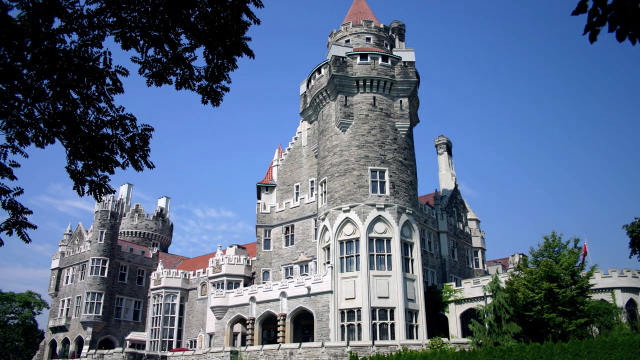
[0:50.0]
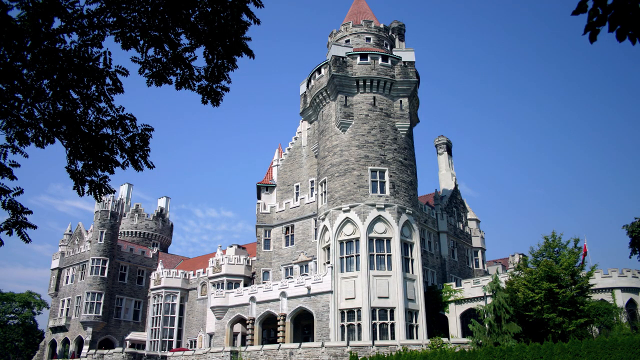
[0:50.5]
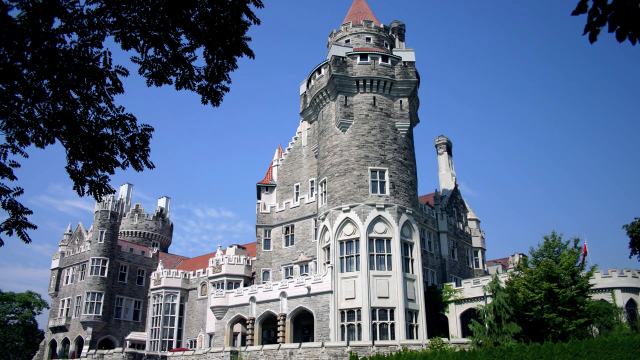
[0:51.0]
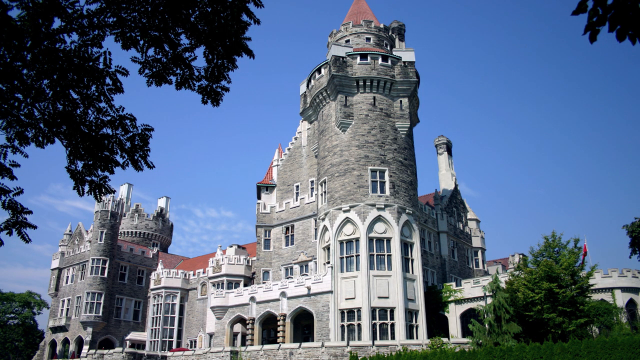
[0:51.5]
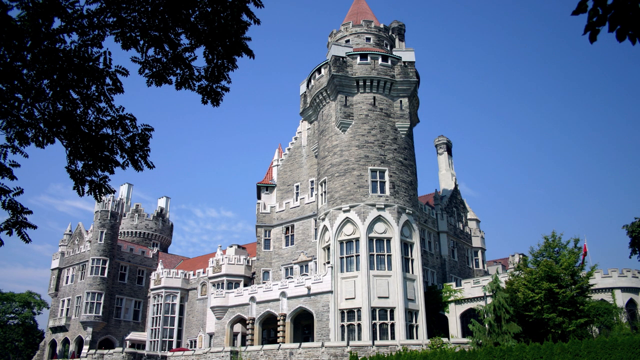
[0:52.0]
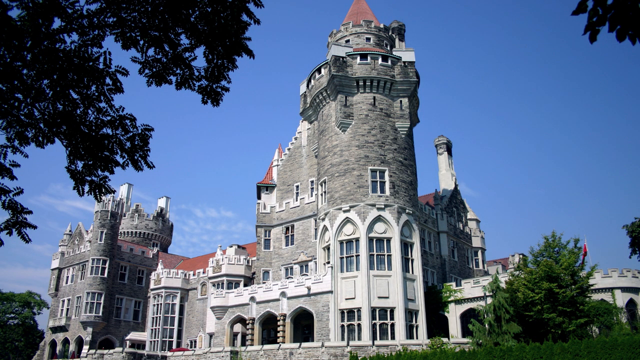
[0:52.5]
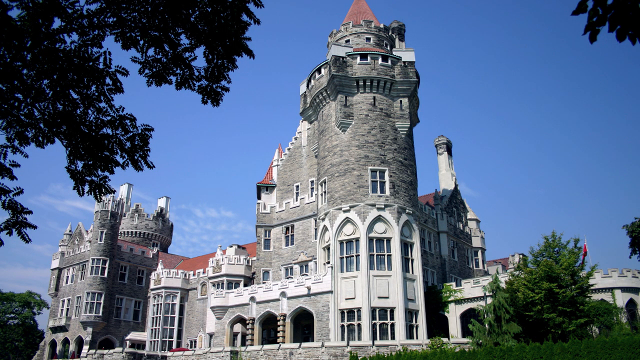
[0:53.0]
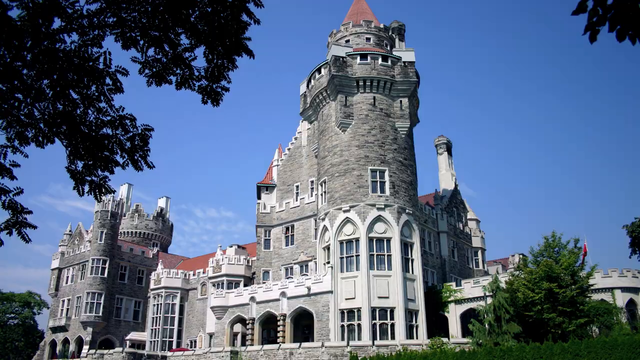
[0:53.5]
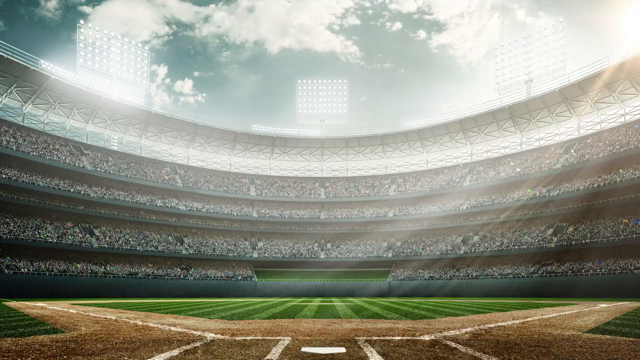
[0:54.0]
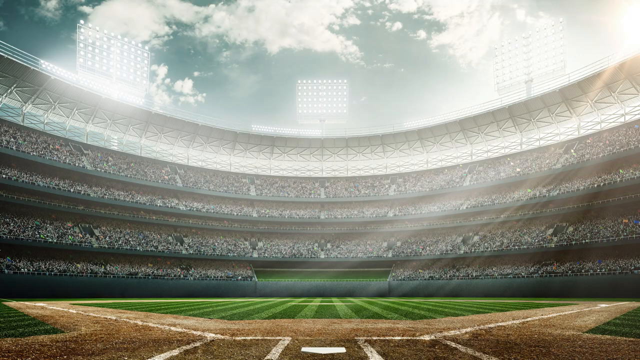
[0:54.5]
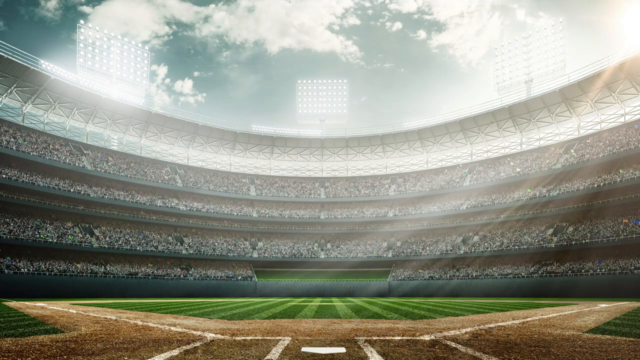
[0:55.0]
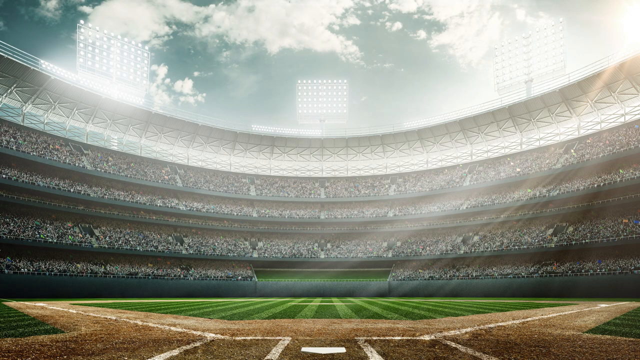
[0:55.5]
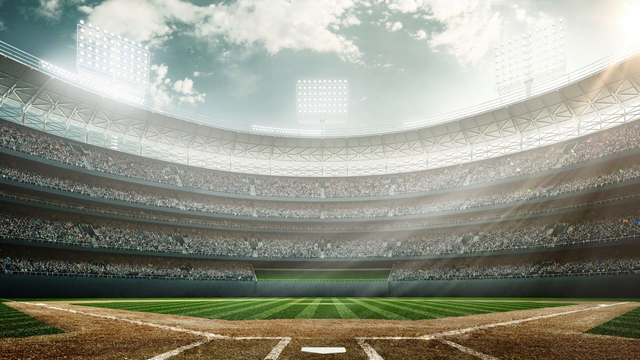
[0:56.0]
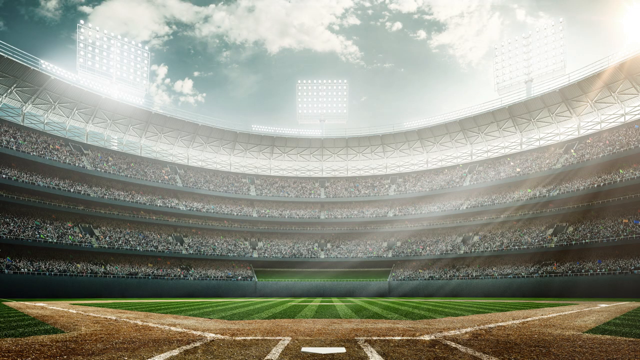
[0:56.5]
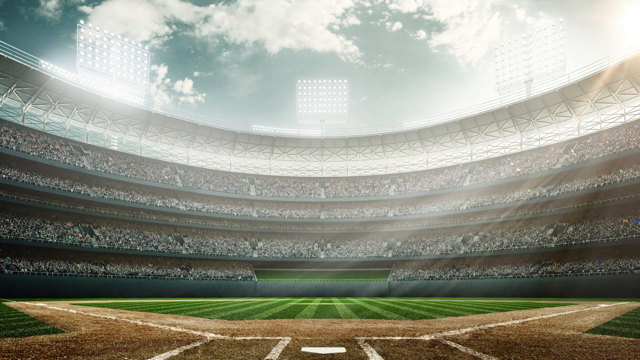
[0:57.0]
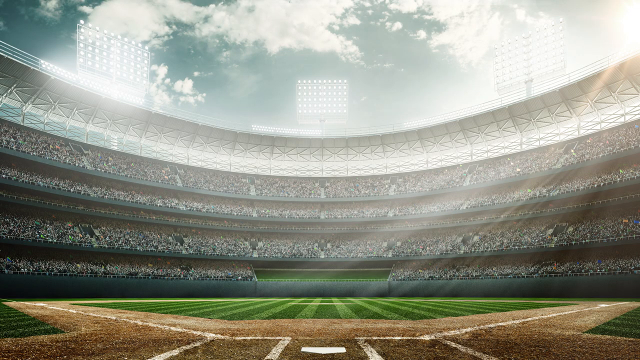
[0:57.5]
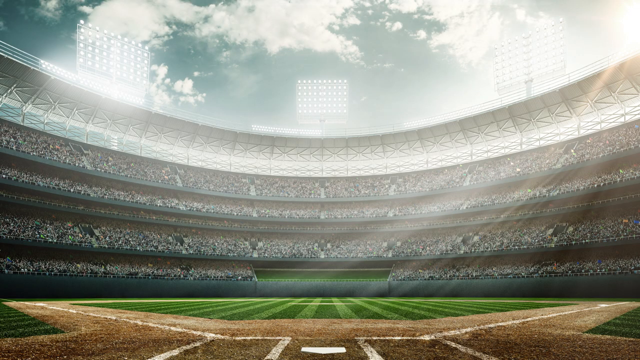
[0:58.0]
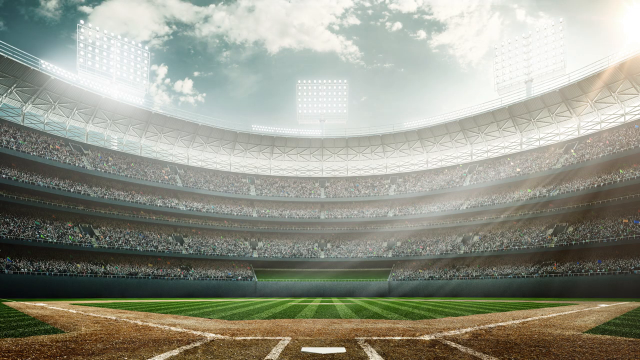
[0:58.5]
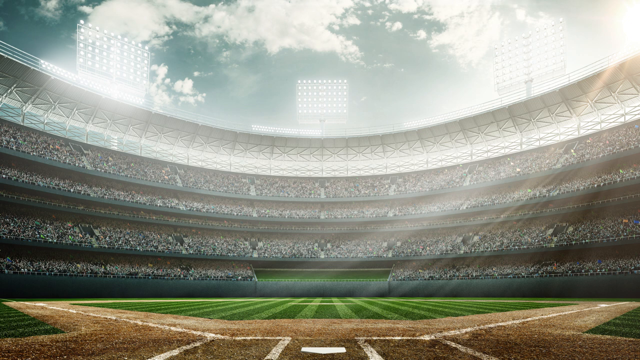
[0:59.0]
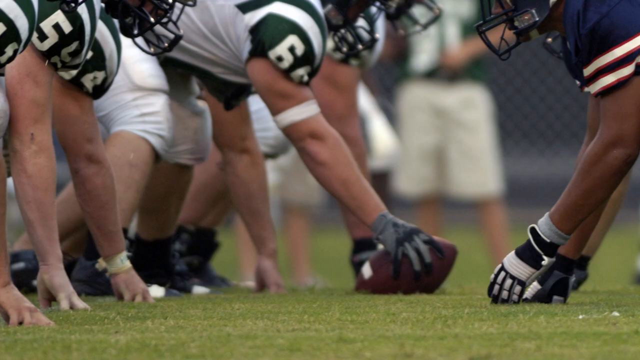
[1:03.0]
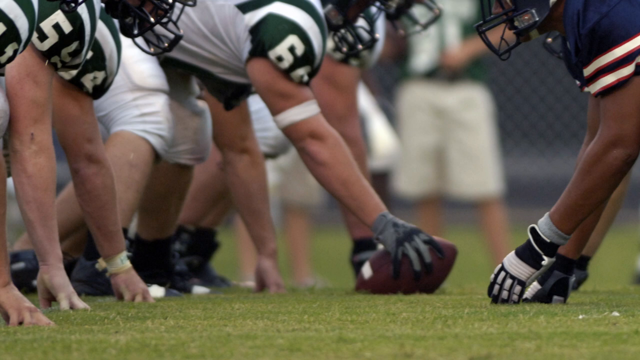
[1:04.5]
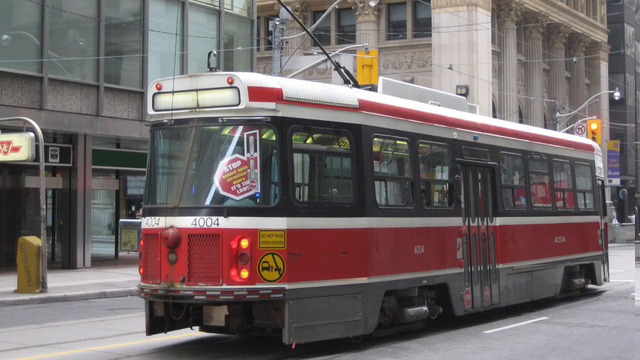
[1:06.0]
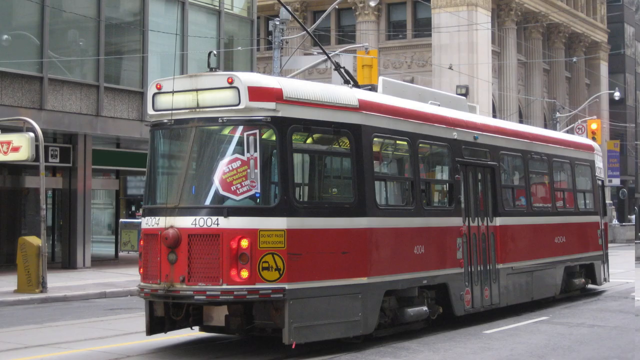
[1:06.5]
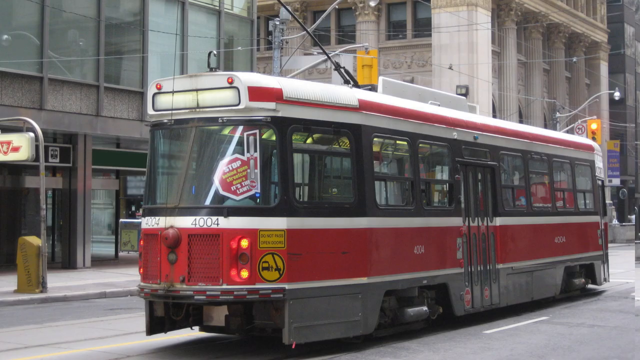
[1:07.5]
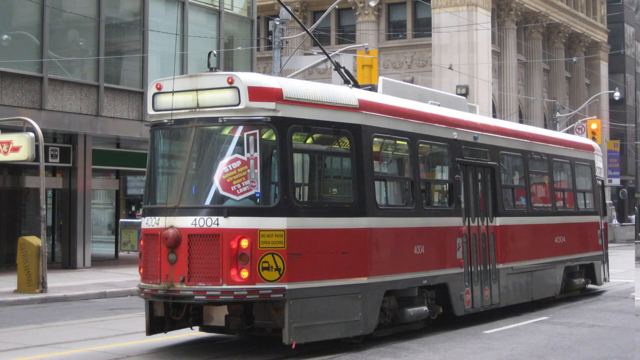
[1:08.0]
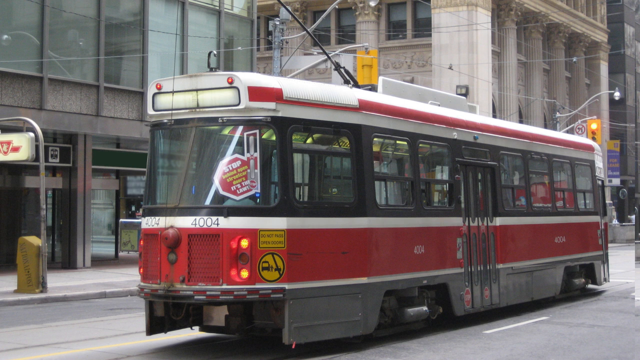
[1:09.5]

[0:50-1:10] A tall building that looks like a cathedral appears, grey and white with a light brown roof, with trees sticking out next to the castle-looking building. Next is a football field with stadium lights and a crowd of spectators, all seated; the grass is green. Footballers are in the start position with helmets on, some wearing gloves. The ball is on the ground, the one in white is holding onto it, and they all have their hands on the green grass. The players have numbers on their jerseys, which are green with a touch of white. The video transitions to a bus with white and red markings and the number "4004" on it.